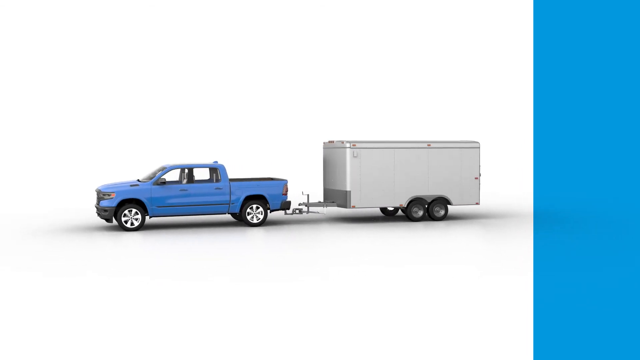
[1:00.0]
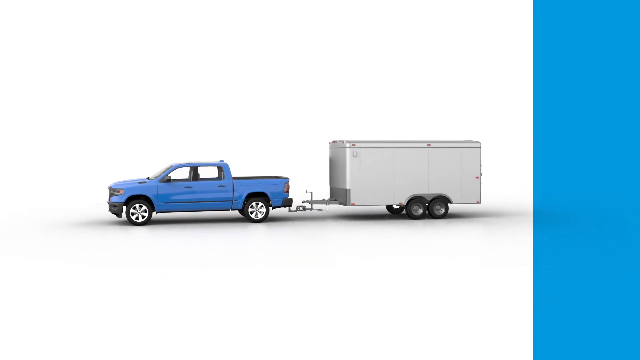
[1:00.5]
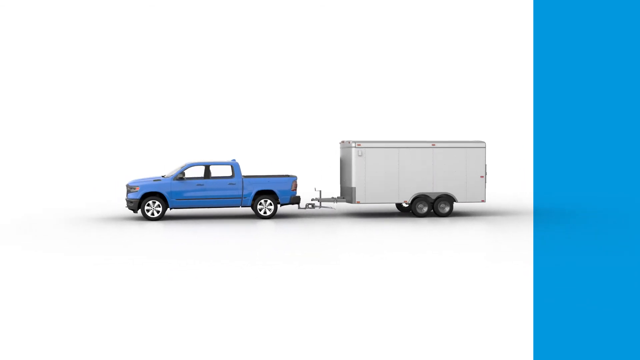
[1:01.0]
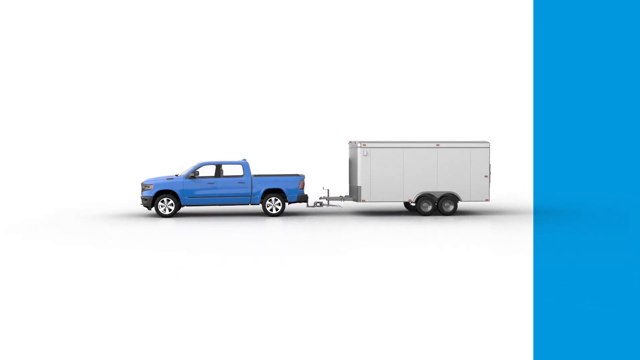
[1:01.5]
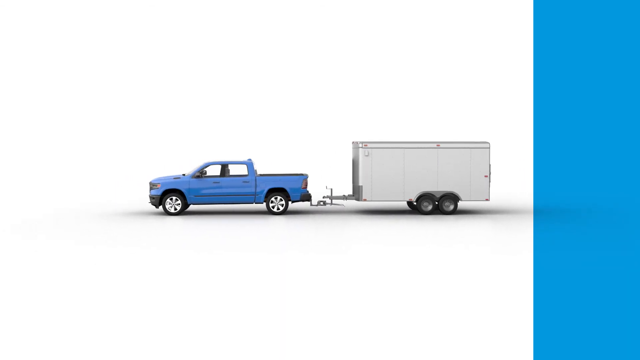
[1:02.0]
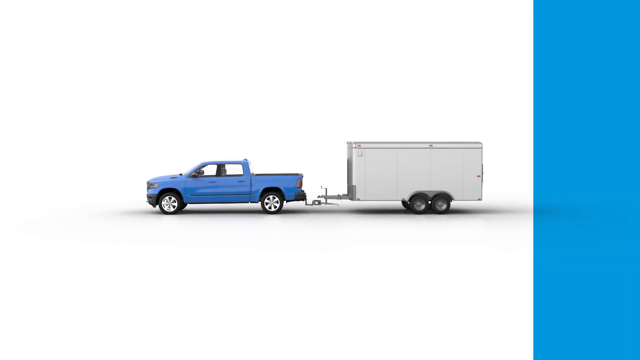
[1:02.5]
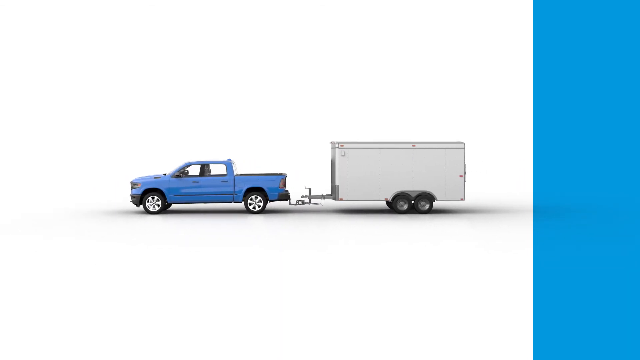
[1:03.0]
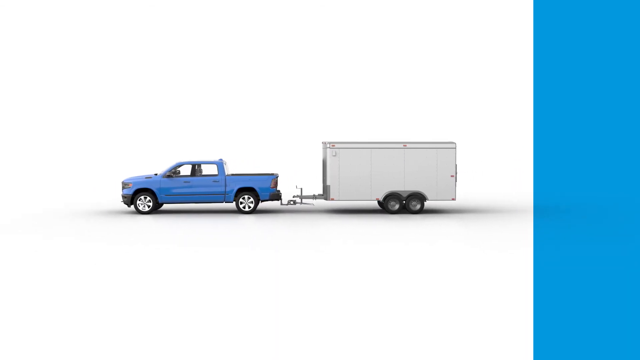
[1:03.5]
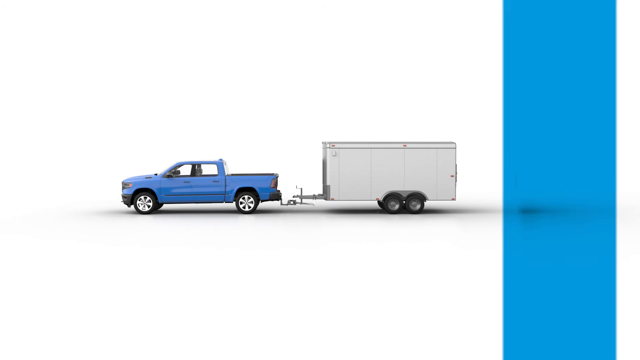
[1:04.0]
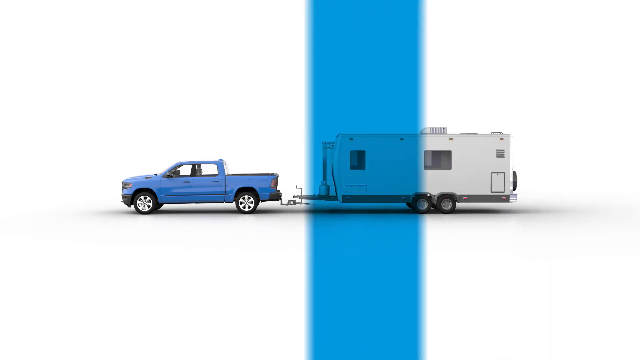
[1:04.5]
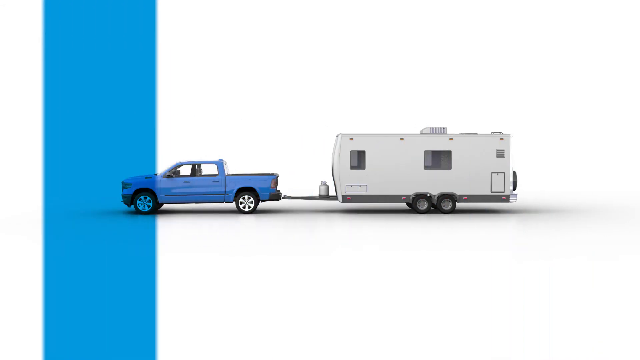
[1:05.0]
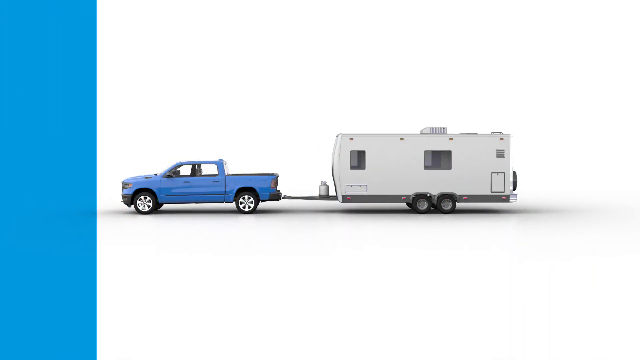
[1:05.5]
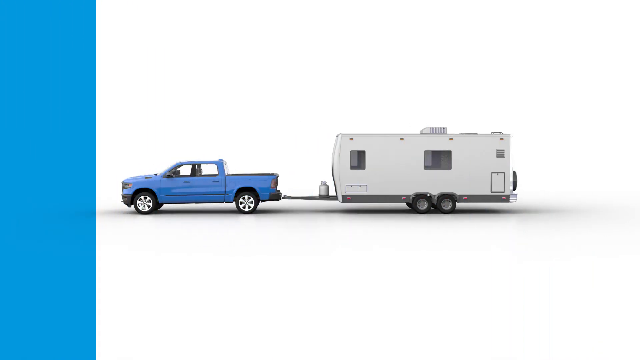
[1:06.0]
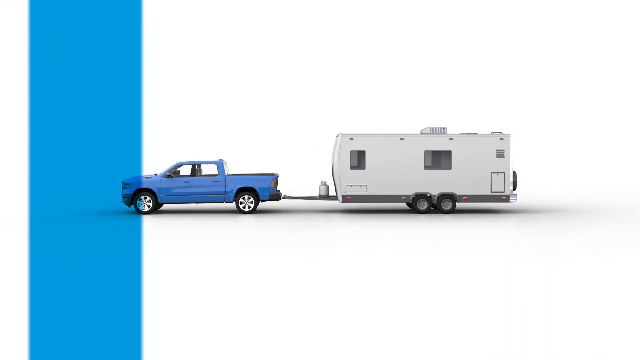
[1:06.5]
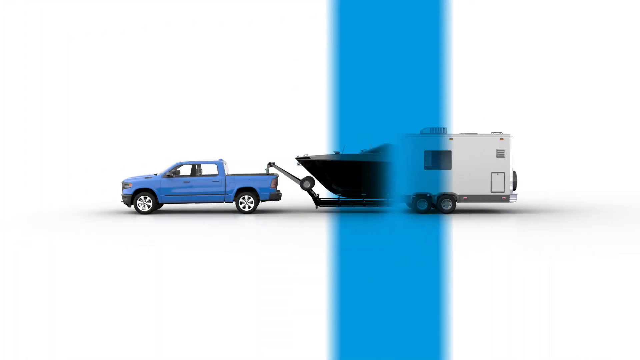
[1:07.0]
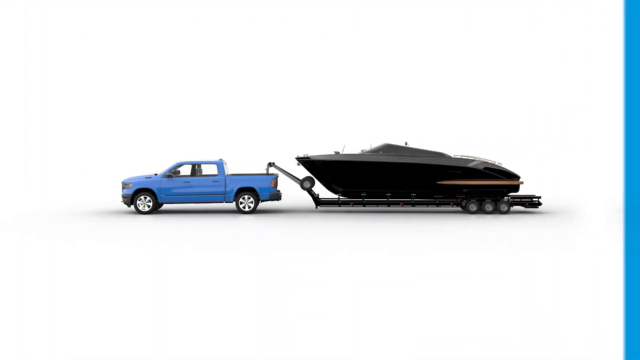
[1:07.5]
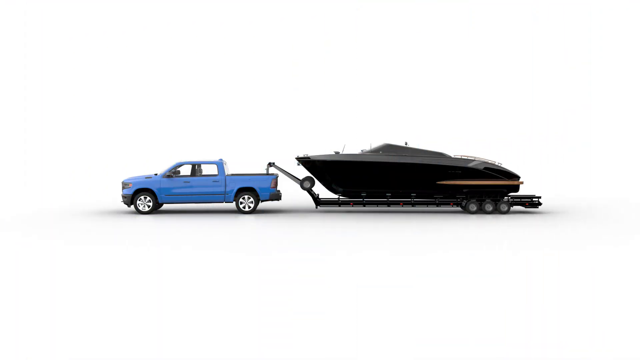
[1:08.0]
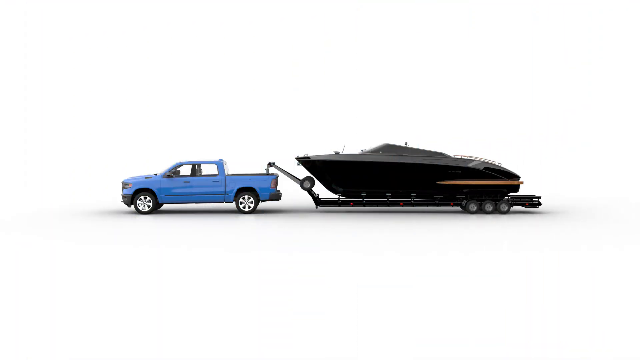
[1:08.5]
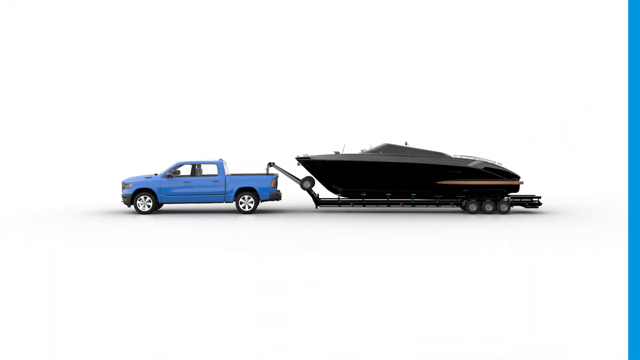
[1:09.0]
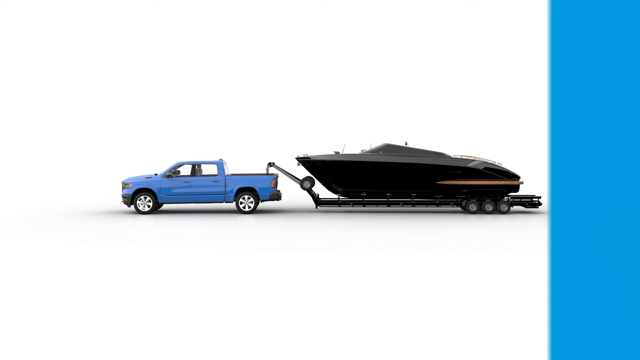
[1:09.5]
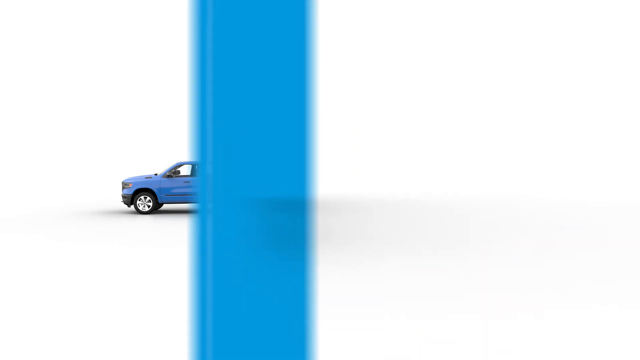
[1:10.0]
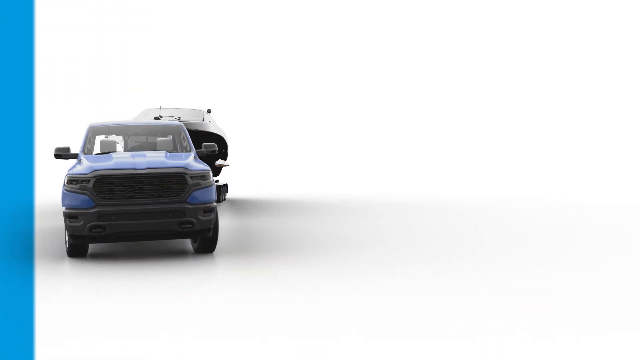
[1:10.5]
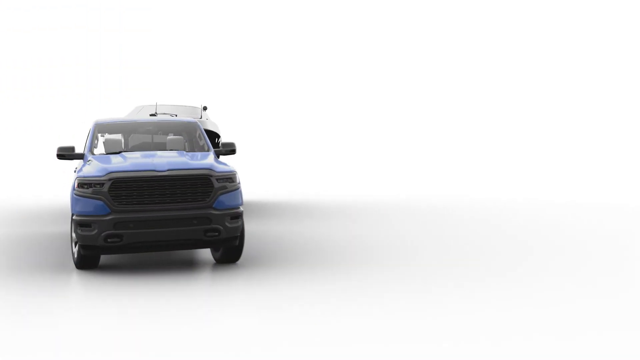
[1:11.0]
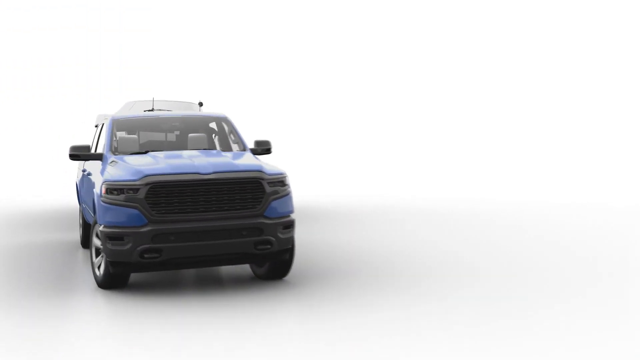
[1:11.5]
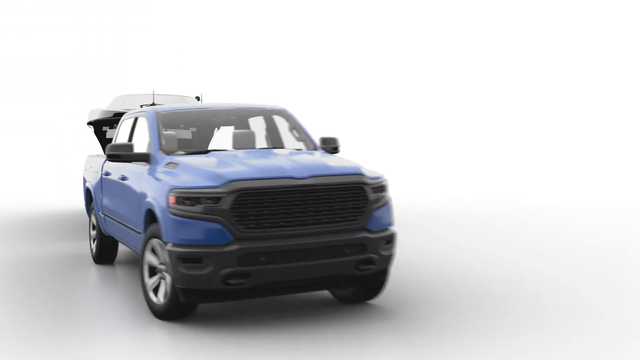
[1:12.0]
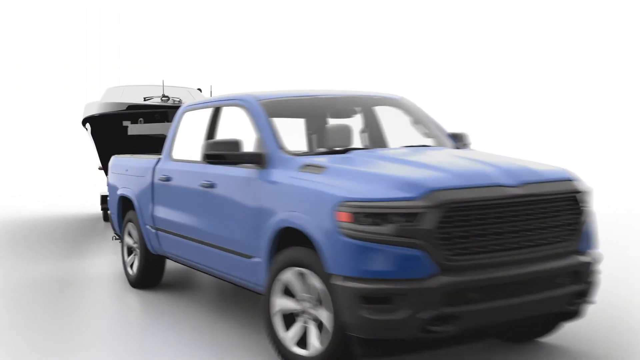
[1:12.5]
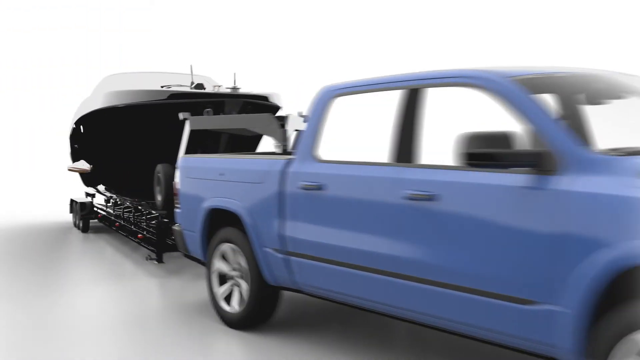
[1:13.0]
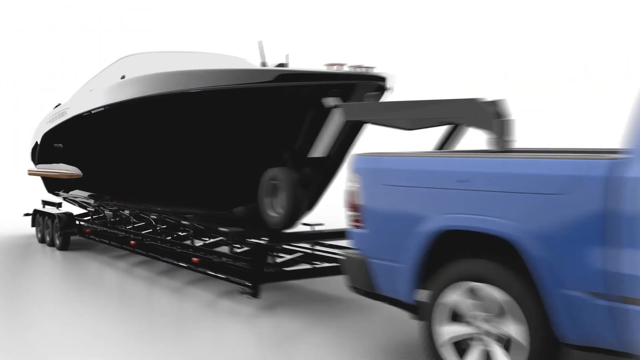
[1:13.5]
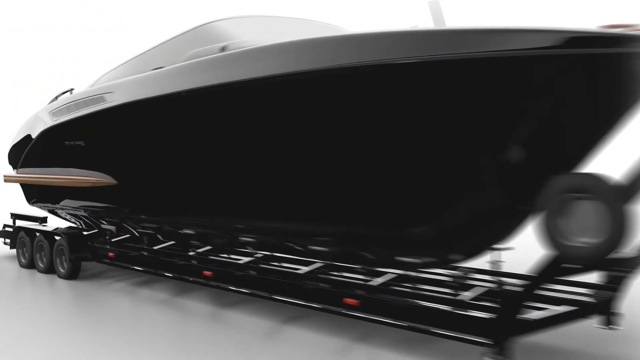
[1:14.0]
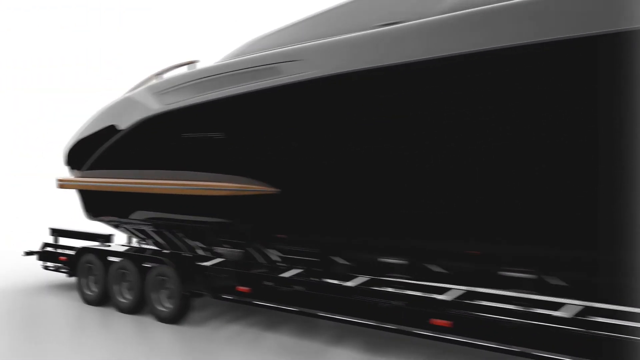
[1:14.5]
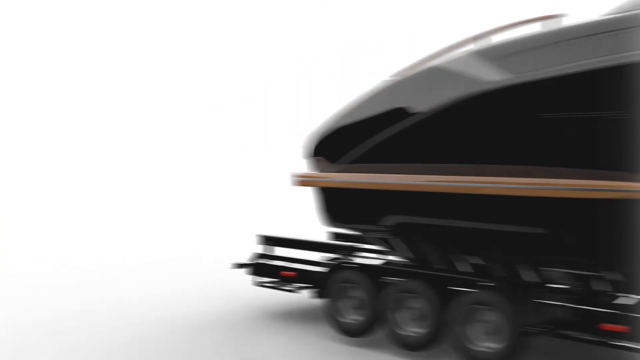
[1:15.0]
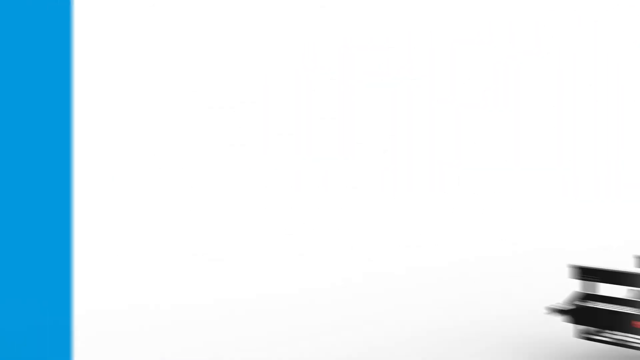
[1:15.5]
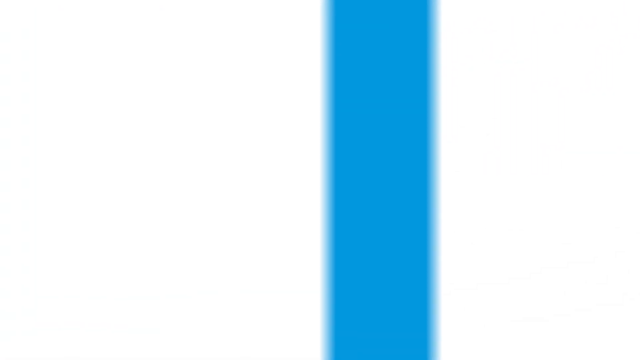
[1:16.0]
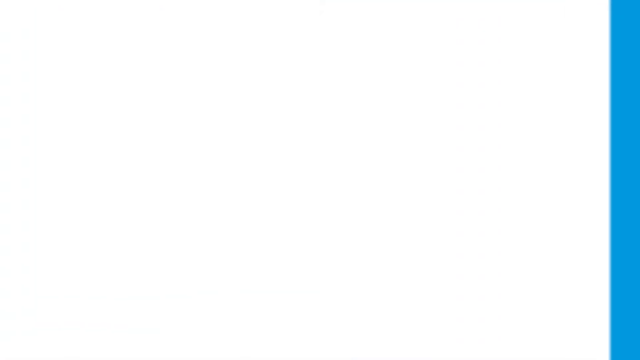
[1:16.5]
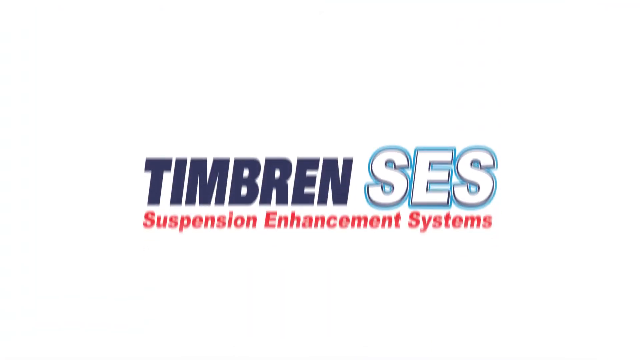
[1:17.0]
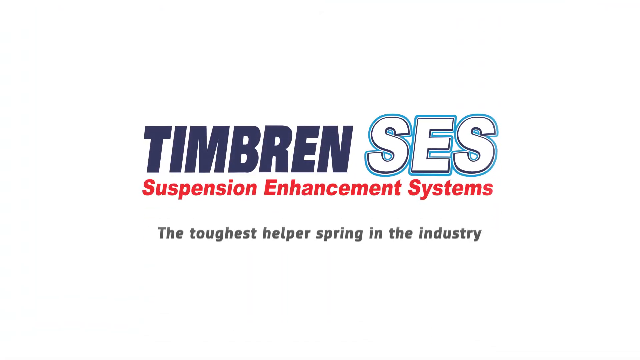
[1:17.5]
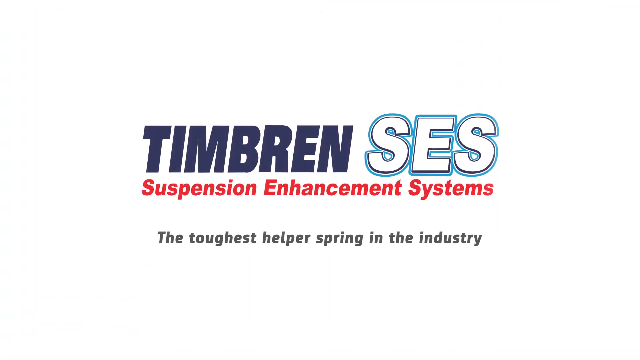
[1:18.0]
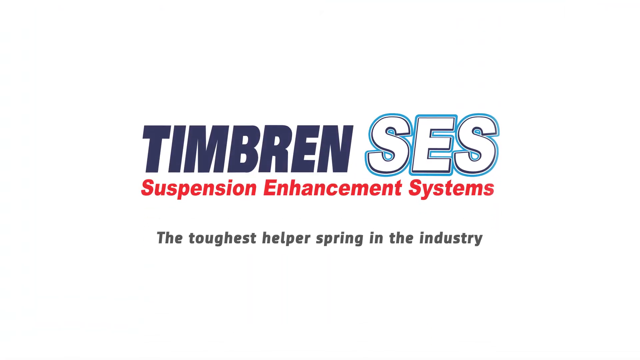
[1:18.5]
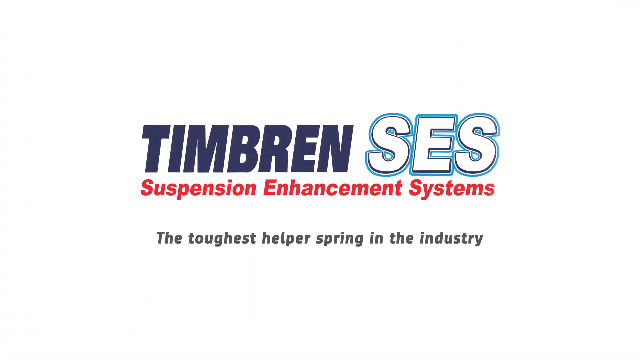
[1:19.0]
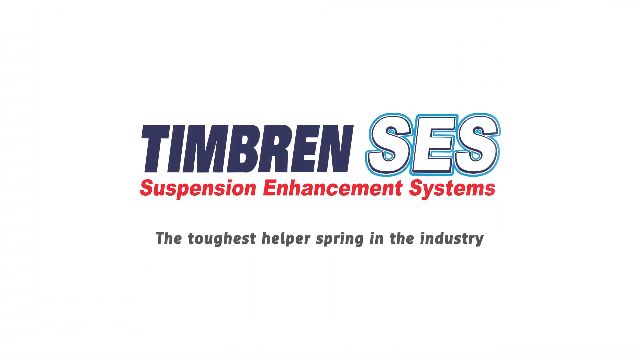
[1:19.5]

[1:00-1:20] The same blue truck pulls the same box trailer, moving toward the left, with a blue bar still on the right side of the screen. The blue bar sweeps over the truck, and the trailer is replaced by a camp trailer while the truck stays the same. The blue bar sweeps back toward the right and changes the trailer into a large black boat, like some kind of racing boat, on a trailer with three axles underneath, still pulled by the same pickup truck. The blue line sweeps across again, and a shot shows the truck from the front with the front of the boat visible behind it. The truck pulls up toward the right and turns so the boat is seen from the other side. The blue line sweeps across again, and text appears on the screen reading "Timbren SES Suspension Enhancement System the toughest helper spring in the industry."